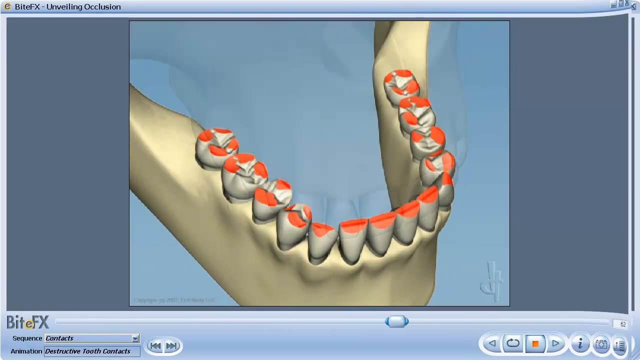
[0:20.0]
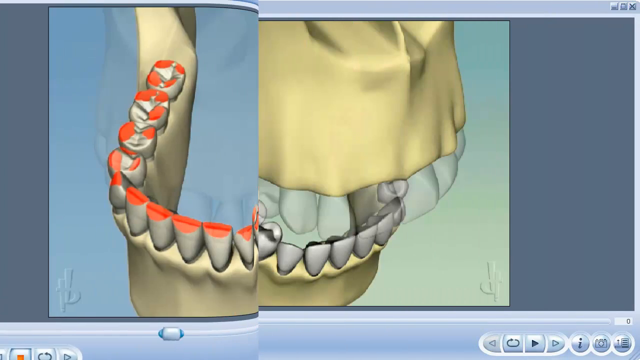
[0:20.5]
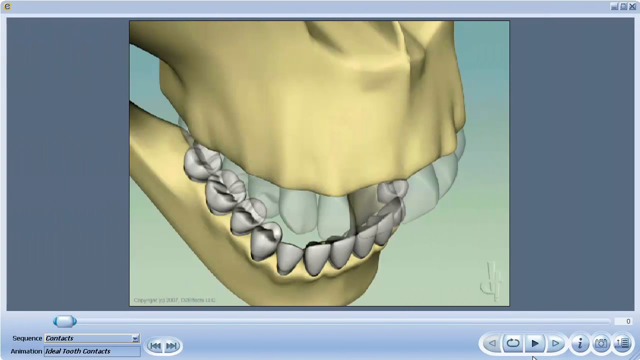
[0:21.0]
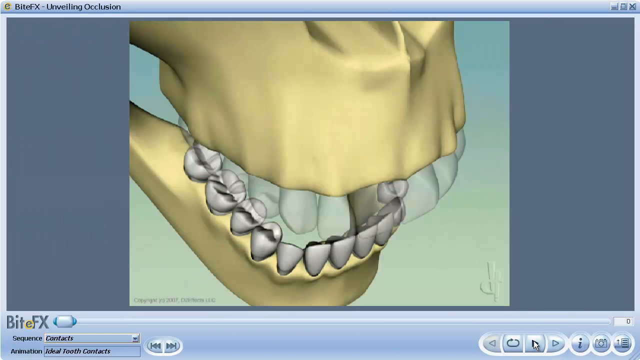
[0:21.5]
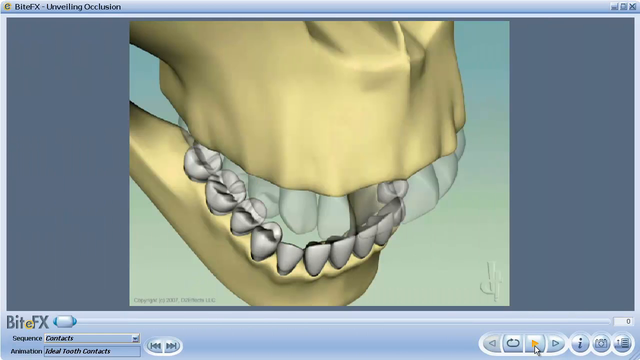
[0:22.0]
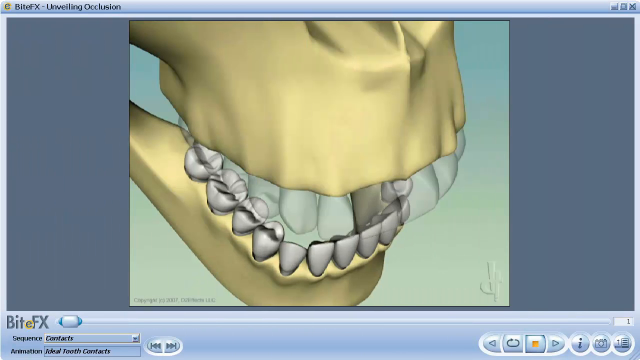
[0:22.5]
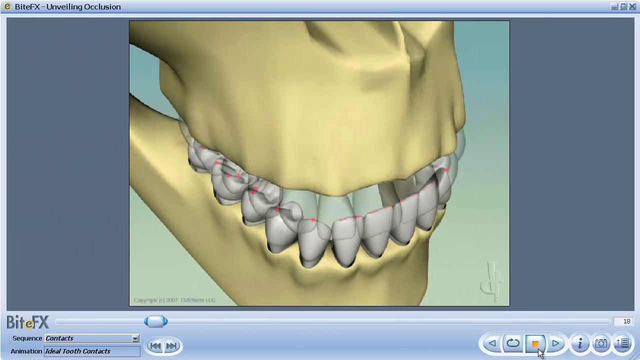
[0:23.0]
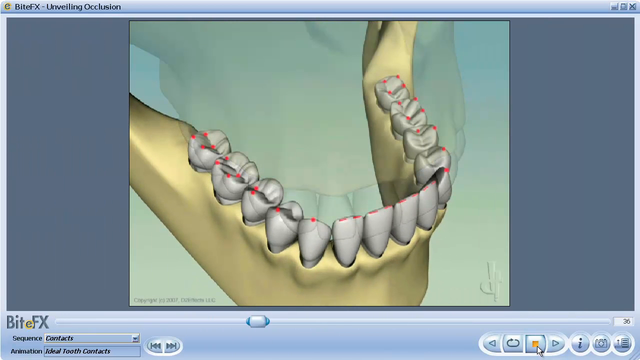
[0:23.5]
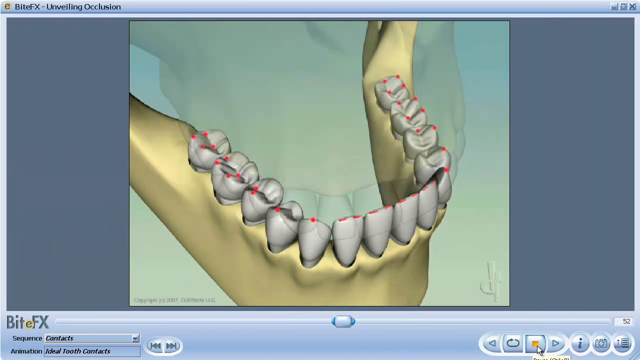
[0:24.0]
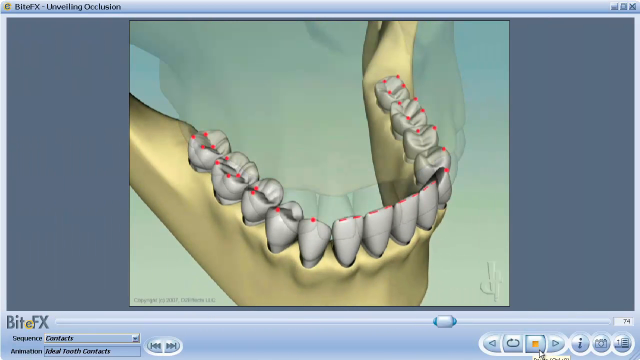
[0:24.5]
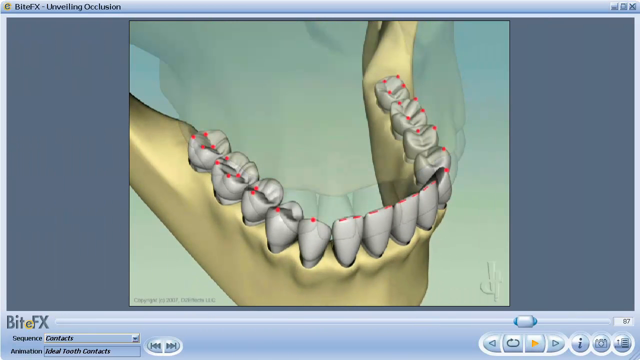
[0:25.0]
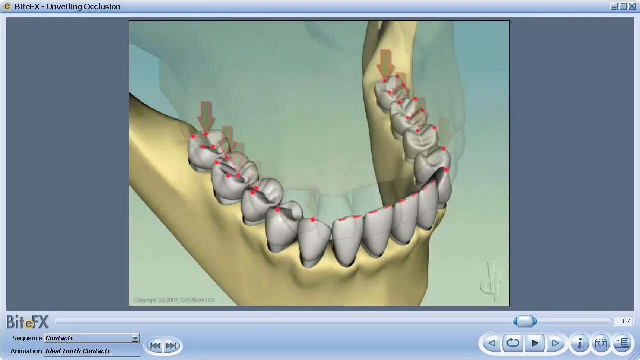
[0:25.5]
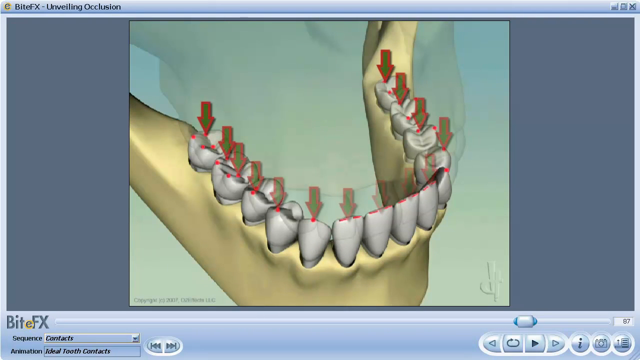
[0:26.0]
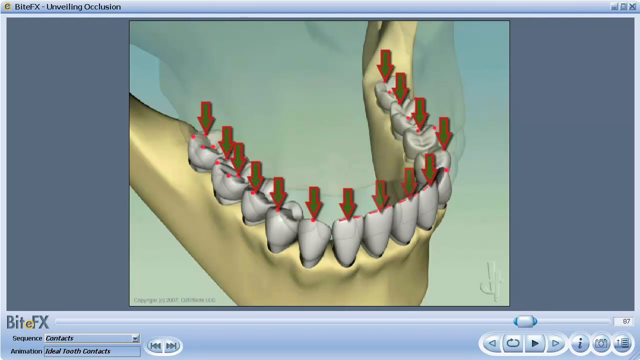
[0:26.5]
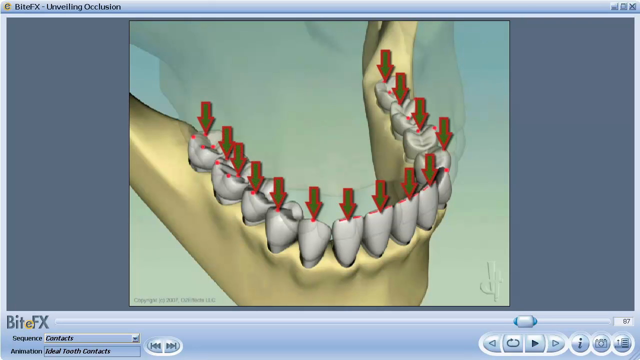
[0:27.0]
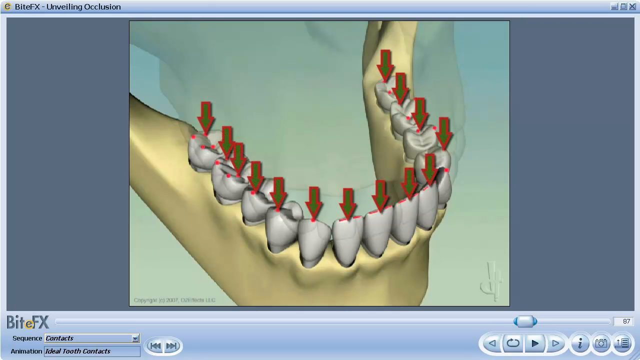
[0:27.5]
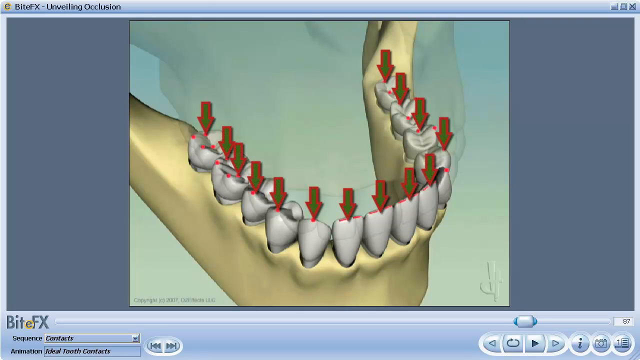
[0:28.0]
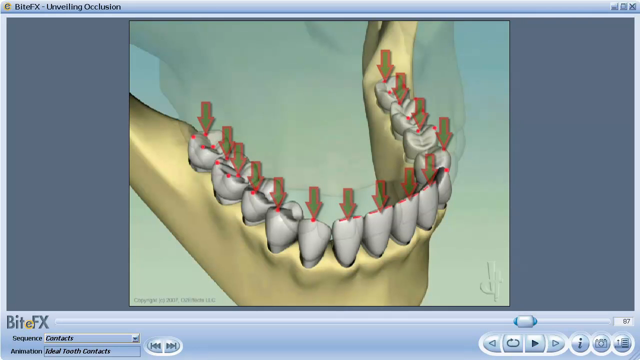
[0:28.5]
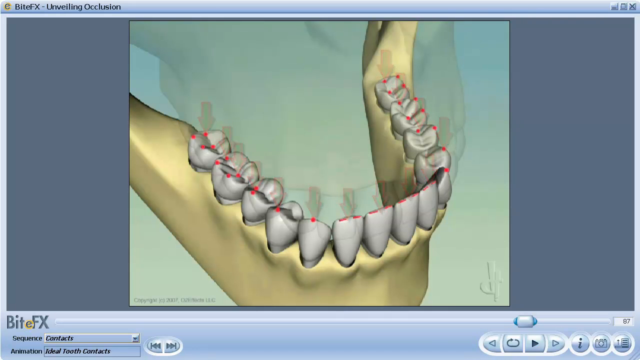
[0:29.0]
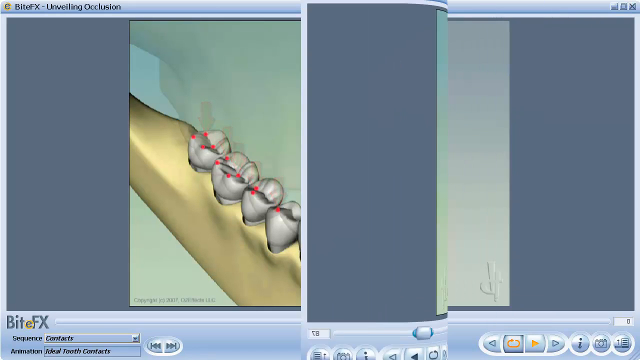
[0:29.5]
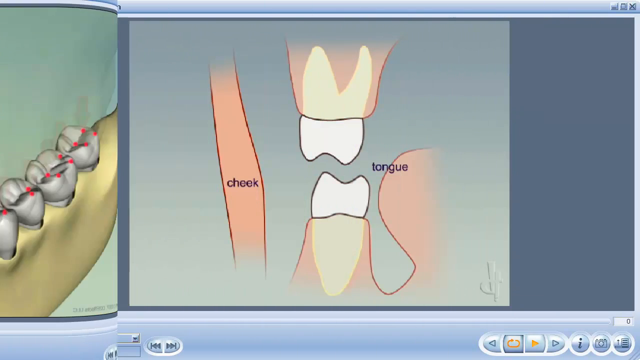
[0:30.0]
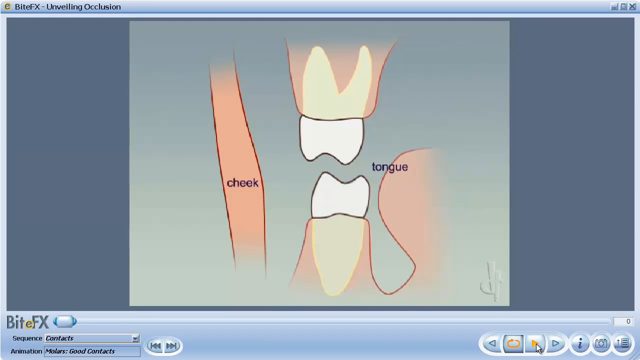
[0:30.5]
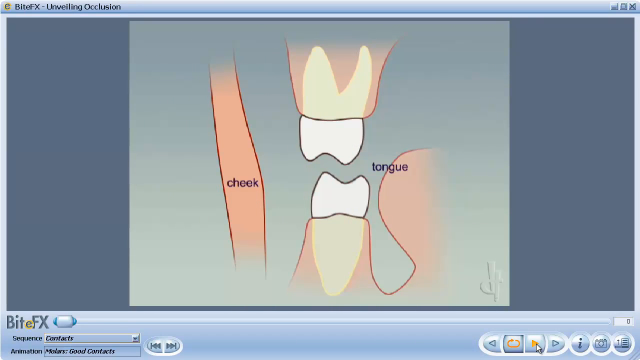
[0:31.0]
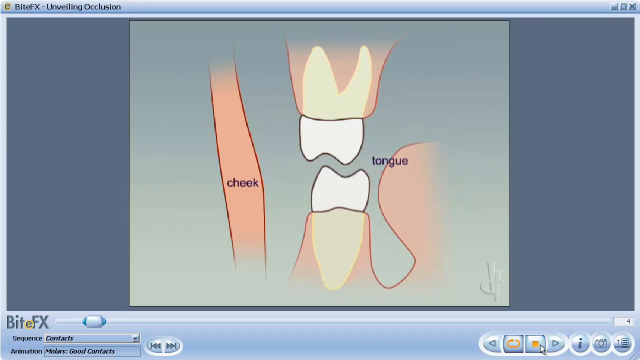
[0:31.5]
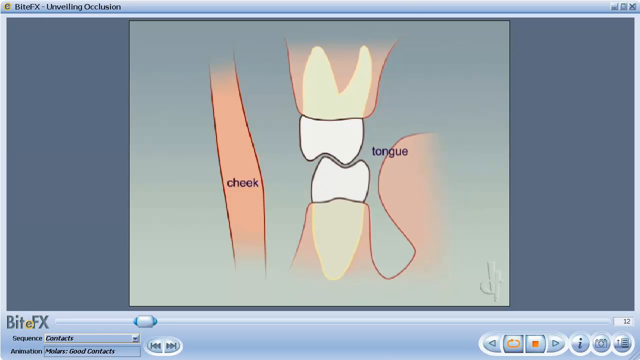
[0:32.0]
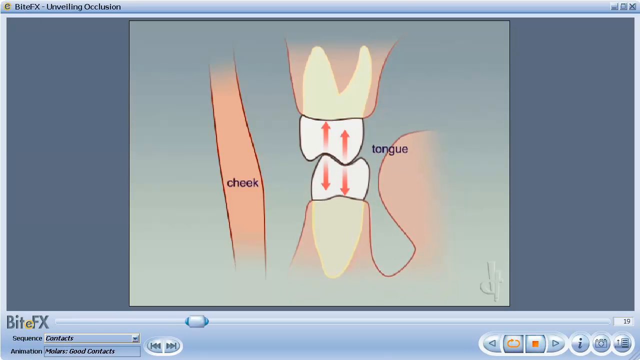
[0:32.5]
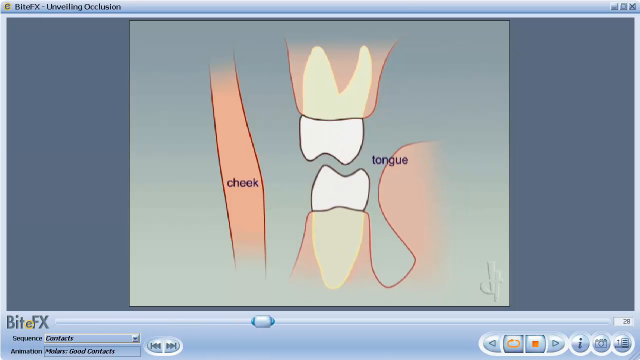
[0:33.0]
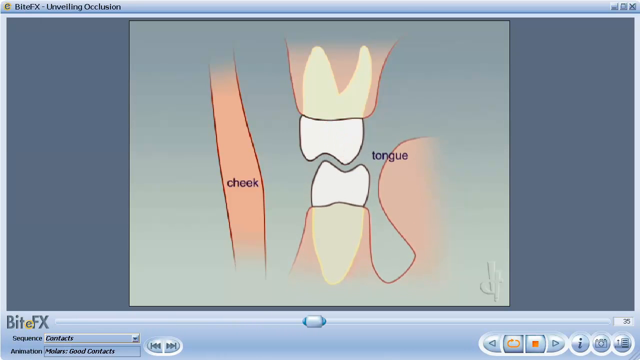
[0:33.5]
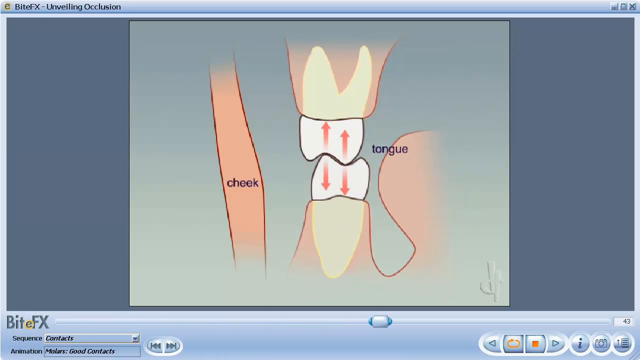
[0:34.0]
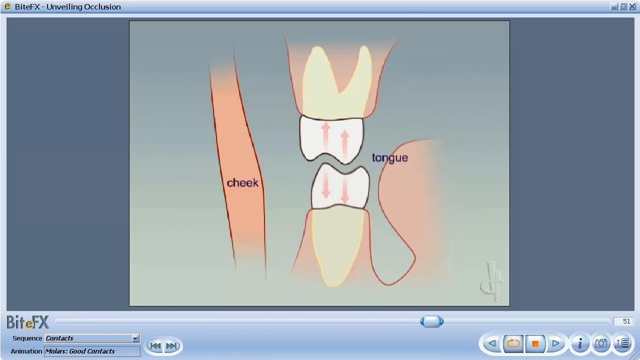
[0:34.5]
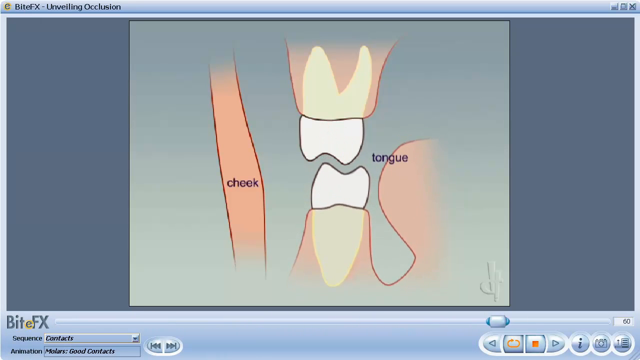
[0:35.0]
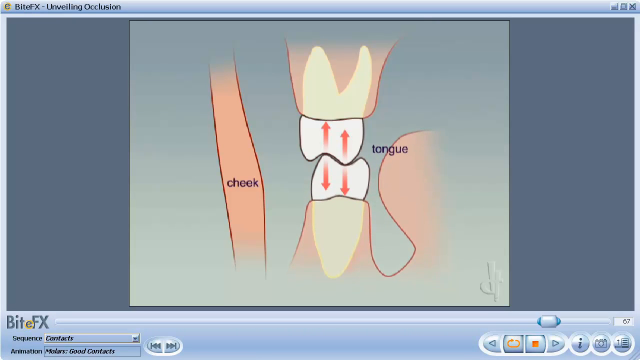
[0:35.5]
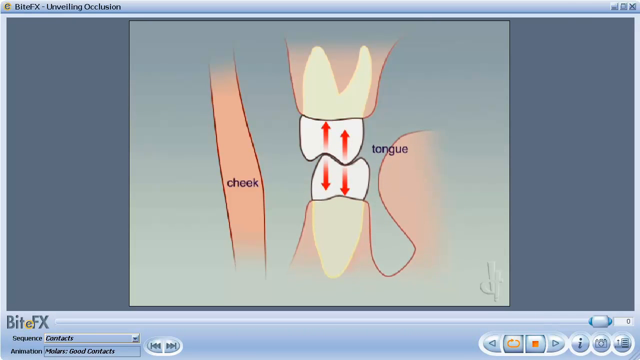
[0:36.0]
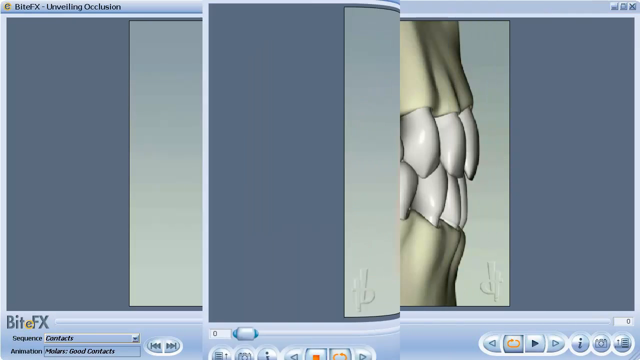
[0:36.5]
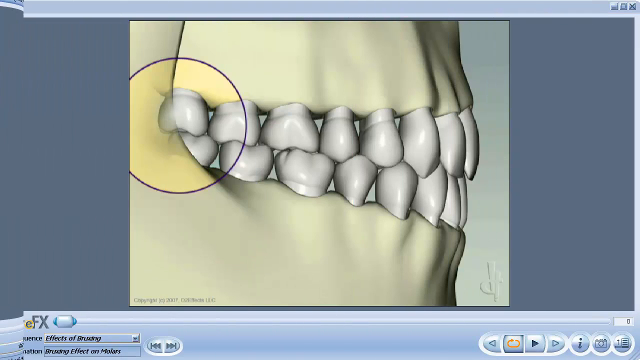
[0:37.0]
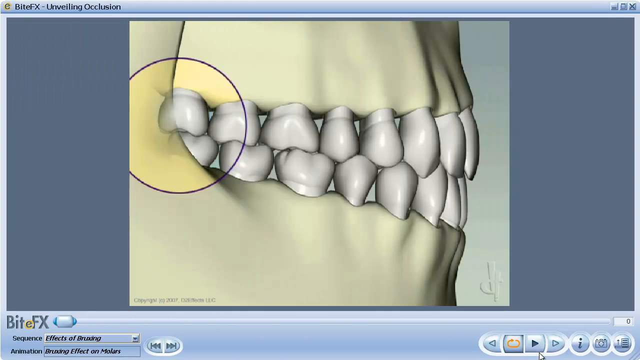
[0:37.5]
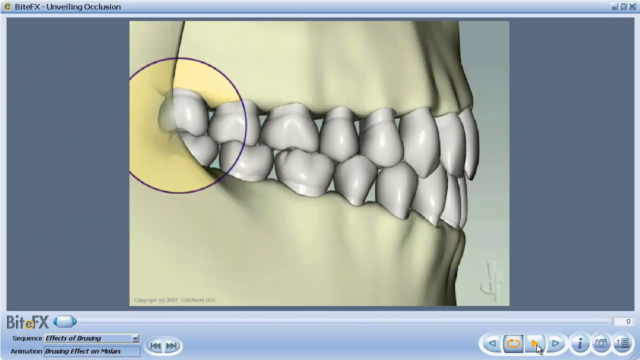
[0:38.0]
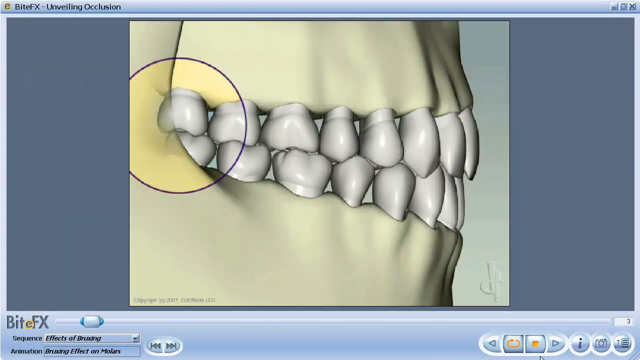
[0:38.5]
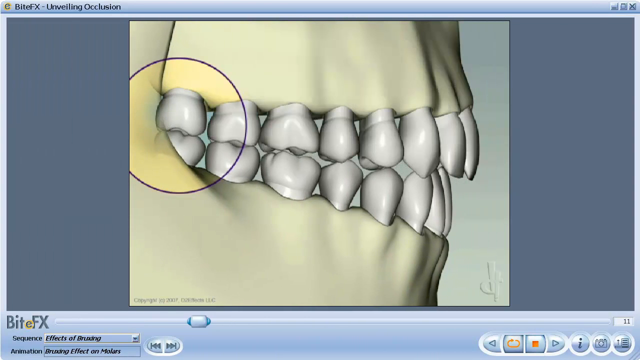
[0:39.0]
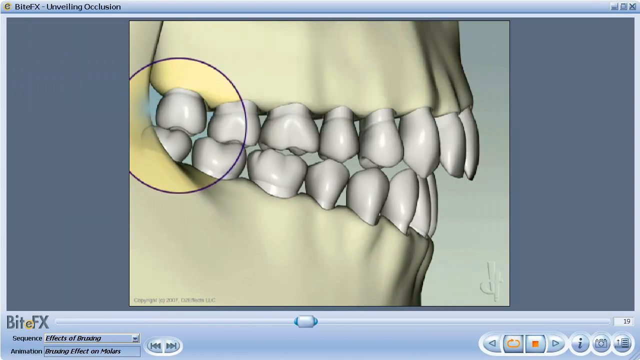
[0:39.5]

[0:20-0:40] Text reads "BiteFX unveiling occlusion." A jaw shows teeth with little red specks on them, and the BiteFX logo appears in the bottom left corner with a little bar. The view swipes to another image, an animation of a skull with teeth: the jaw goes up and little red circular dots appear on some areas of the teeth, then green and red arrows point to different areas of the teeth. The next image shows blue text reading "Cheek and tongue" and some teeth; one tooth moves up to touch another, with red arrows going up and down, and the animation continues with the teeth moving up and down. A swipe leads to another animation showing teeth very up close from the side, with a little circle highlighting one tooth kind of touching the other teeth; the teeth look like they are grinding together.